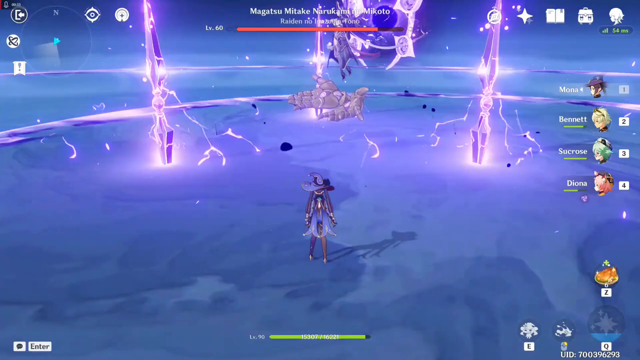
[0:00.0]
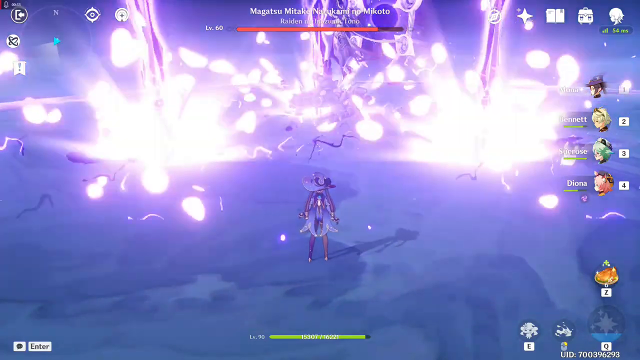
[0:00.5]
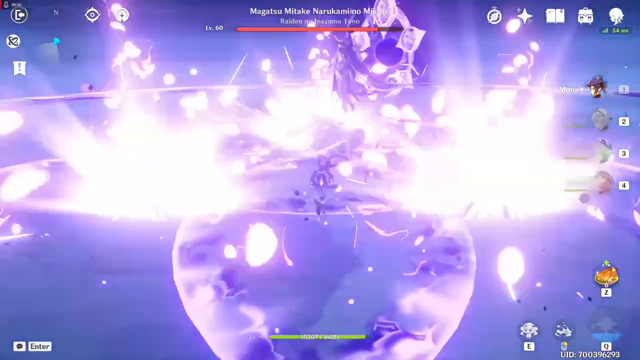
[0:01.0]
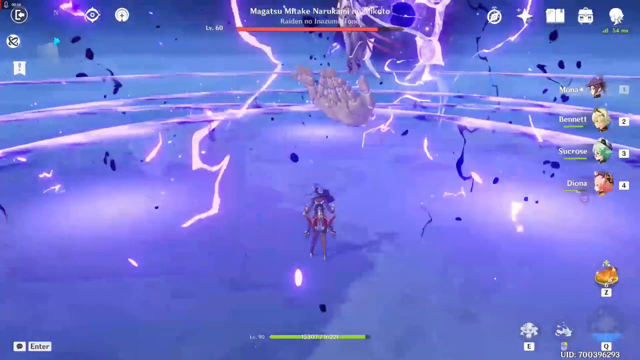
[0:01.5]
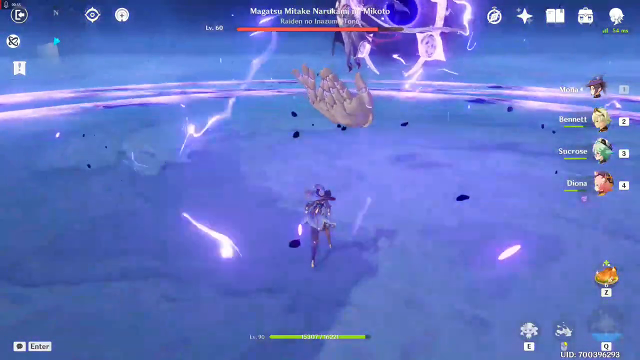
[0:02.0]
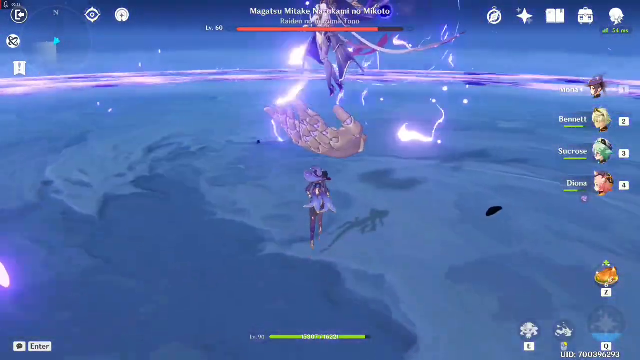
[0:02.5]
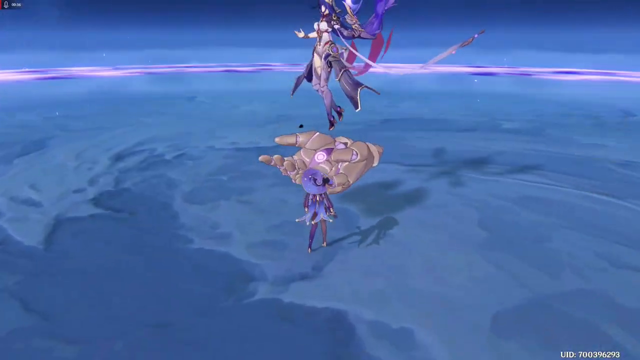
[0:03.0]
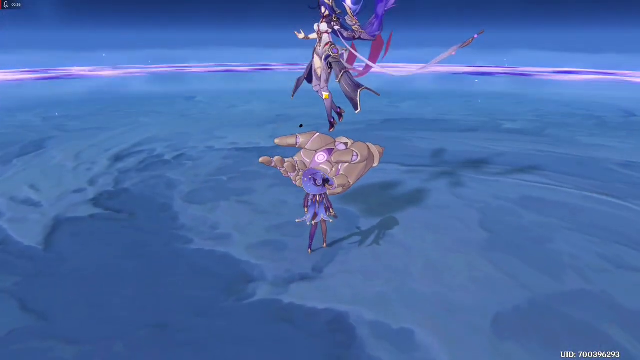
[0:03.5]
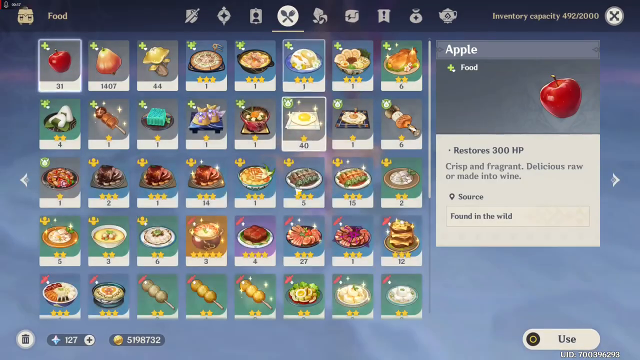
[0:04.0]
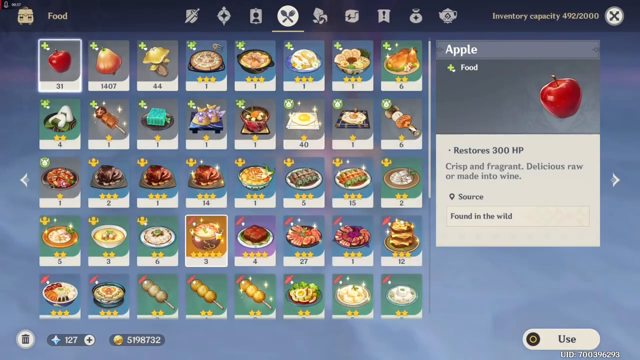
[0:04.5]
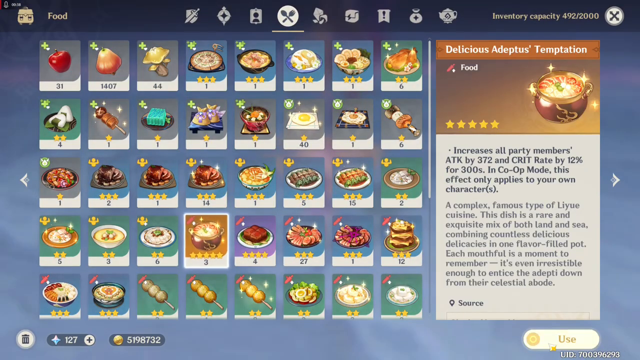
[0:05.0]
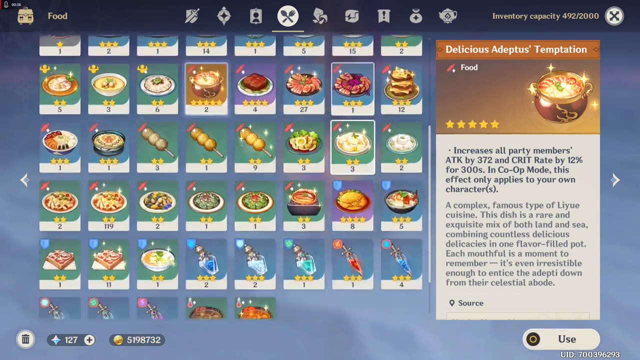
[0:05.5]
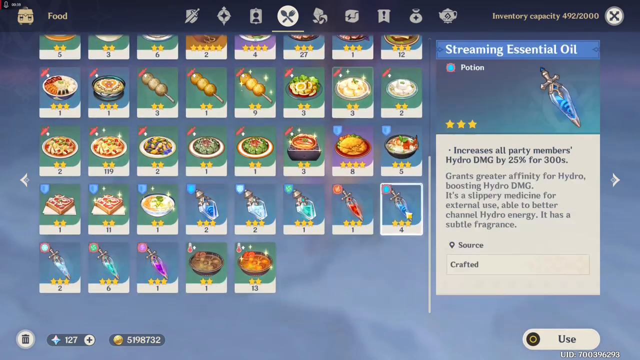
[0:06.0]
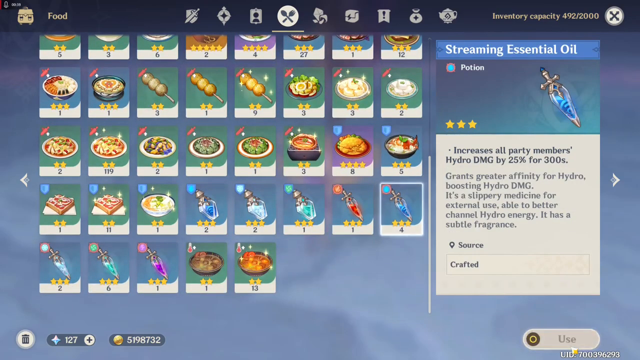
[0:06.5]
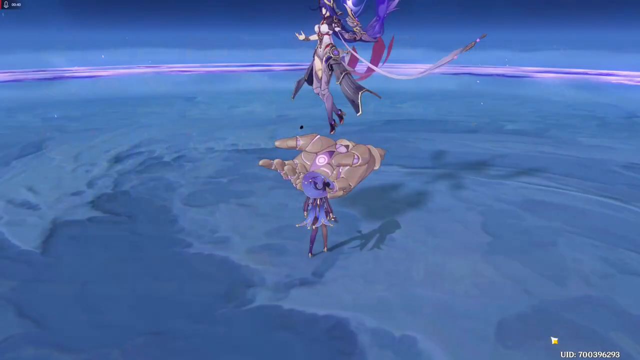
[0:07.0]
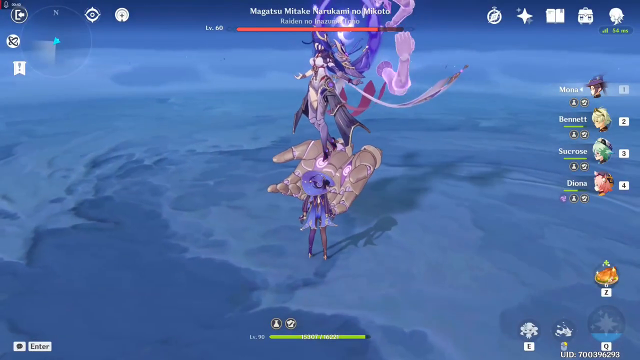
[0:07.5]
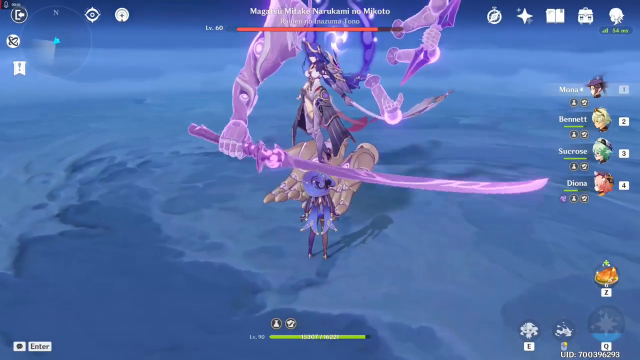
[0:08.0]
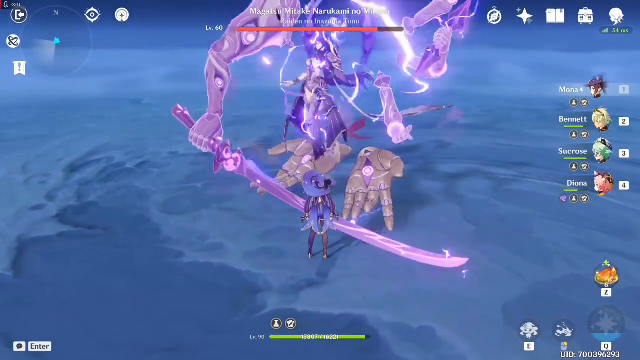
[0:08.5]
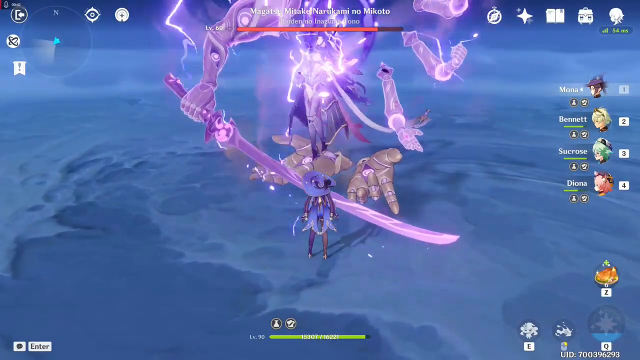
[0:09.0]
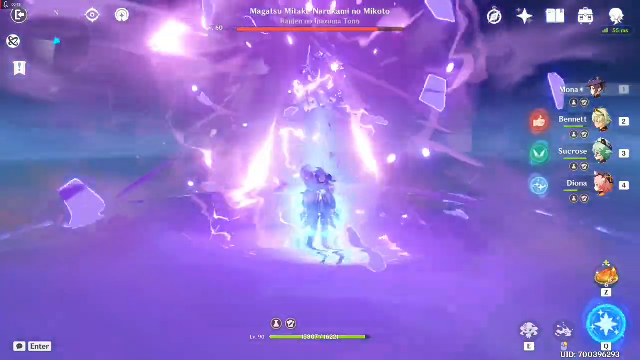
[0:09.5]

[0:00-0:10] This is a video game playthrough. At first, a character is in battle in a large arena. Then the person playing the game apparently brings up the menu screen to select an object for the game character being played in the center of the screen. They select a sword, which is given to the character, and the character appears to turn around to continue playing and engage in the battle. In the top center of the screen are some game stats, apparently the character's name and their statistics at this point in the game. Other buttons are all around the top part of the screen. On the right side of the screen are more buttons, which look like they are different gameplay characters.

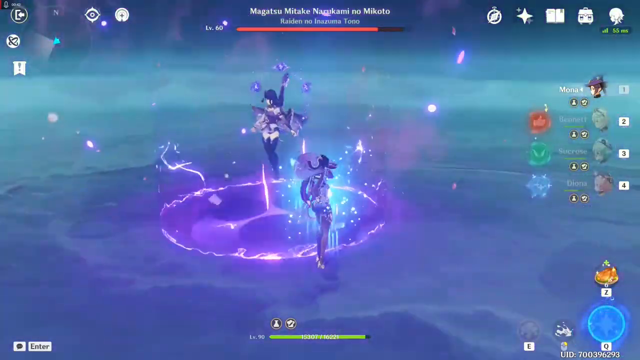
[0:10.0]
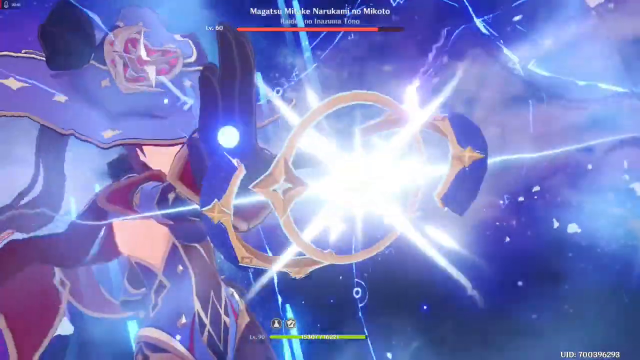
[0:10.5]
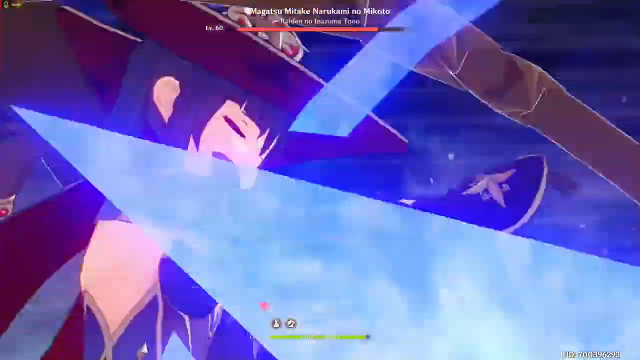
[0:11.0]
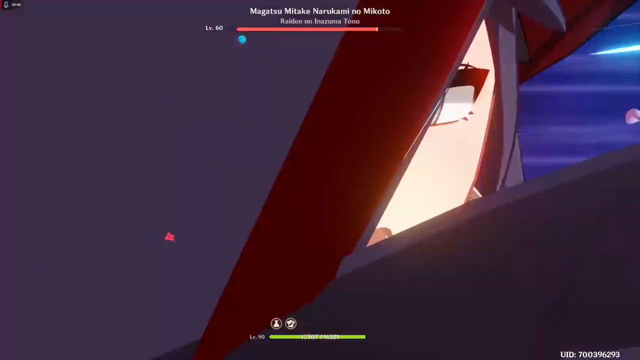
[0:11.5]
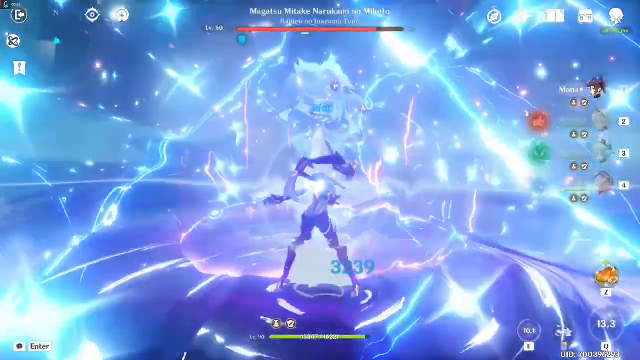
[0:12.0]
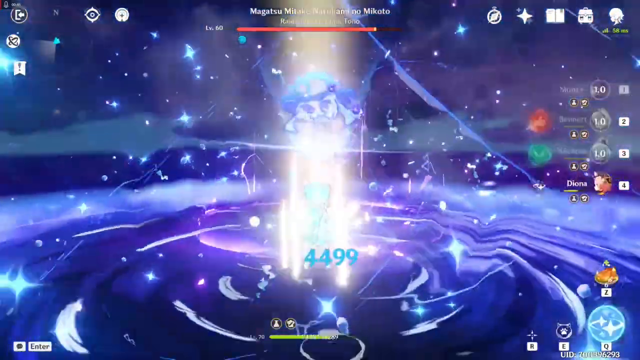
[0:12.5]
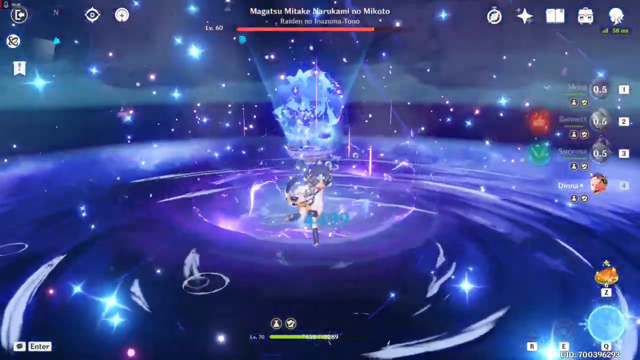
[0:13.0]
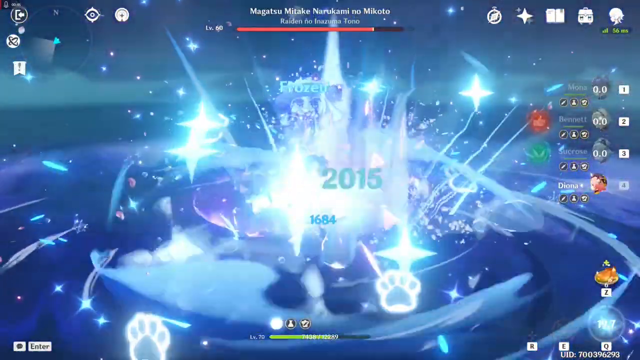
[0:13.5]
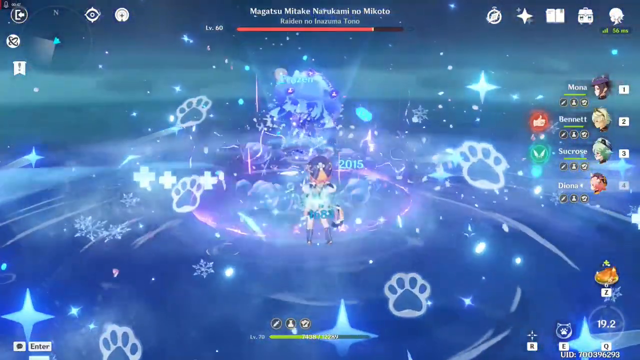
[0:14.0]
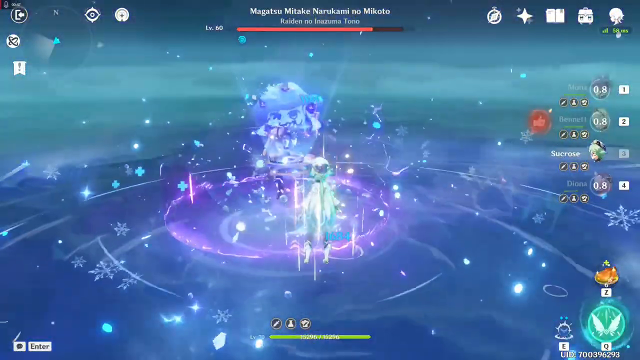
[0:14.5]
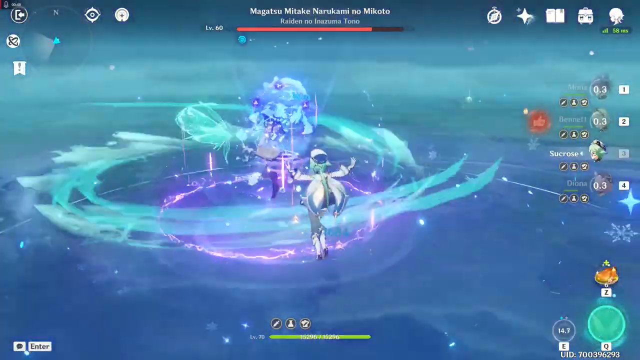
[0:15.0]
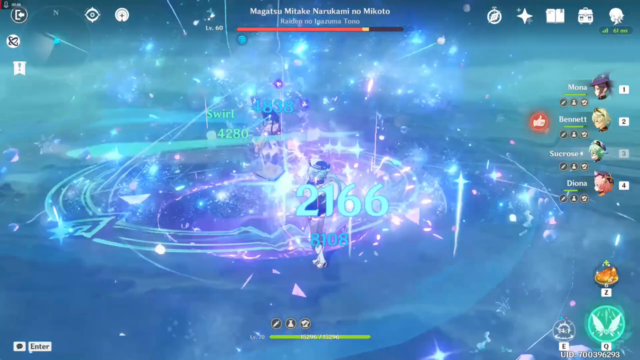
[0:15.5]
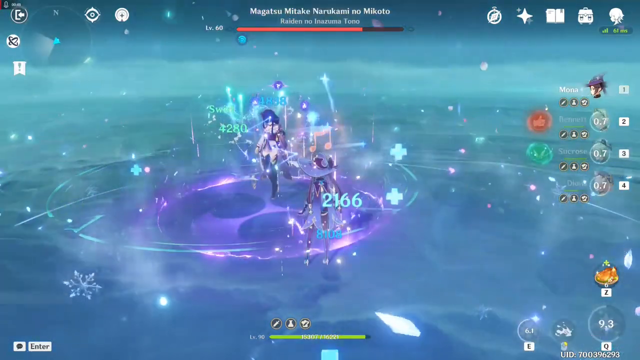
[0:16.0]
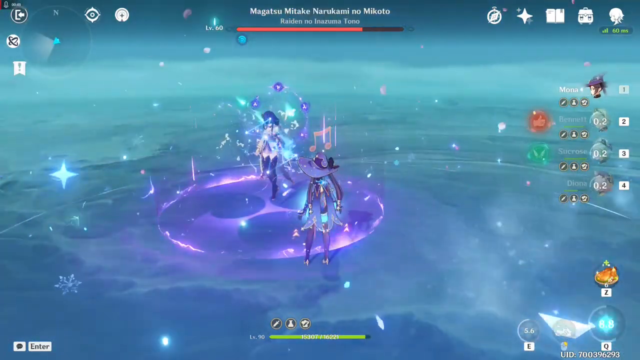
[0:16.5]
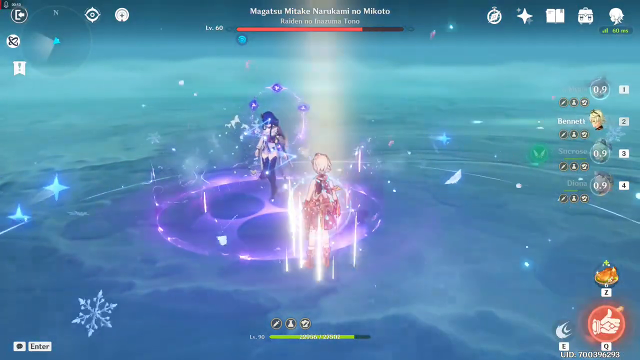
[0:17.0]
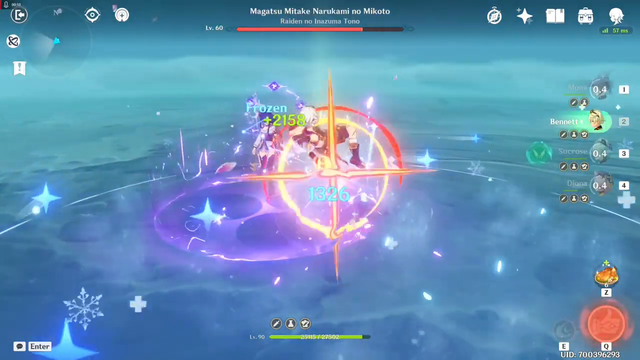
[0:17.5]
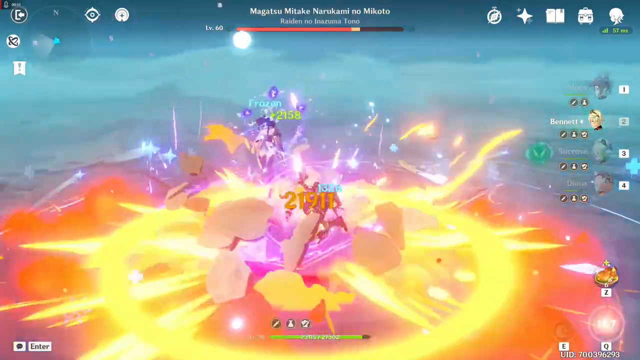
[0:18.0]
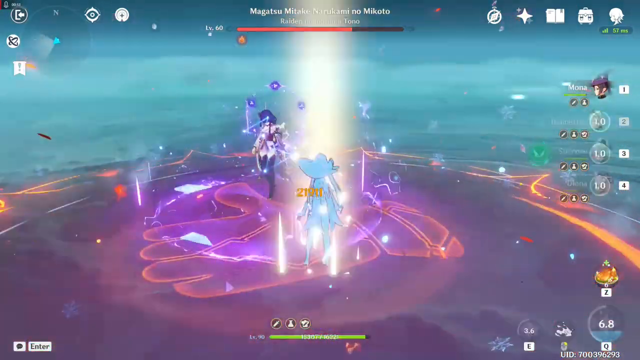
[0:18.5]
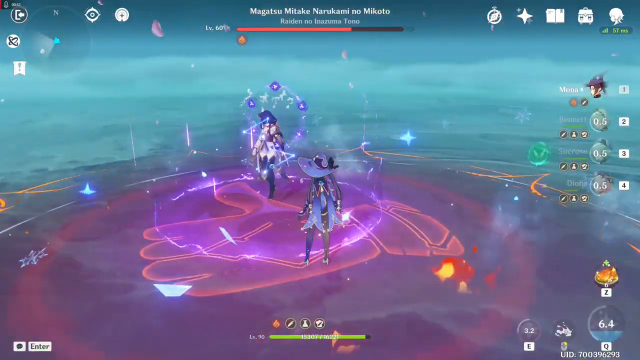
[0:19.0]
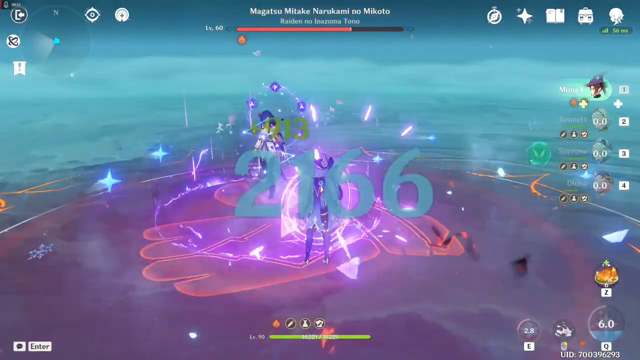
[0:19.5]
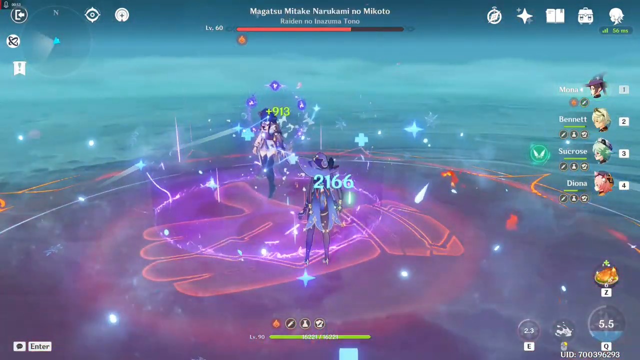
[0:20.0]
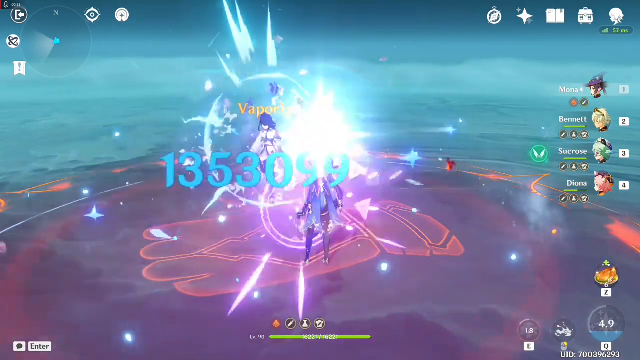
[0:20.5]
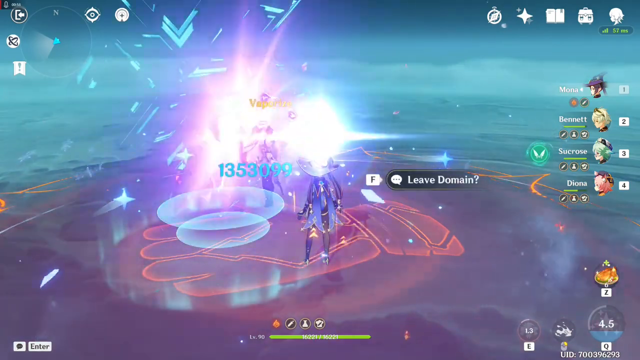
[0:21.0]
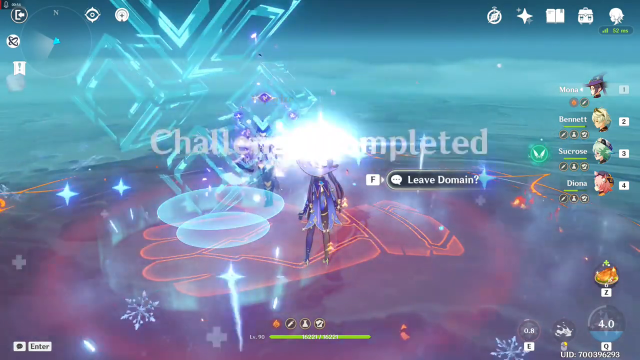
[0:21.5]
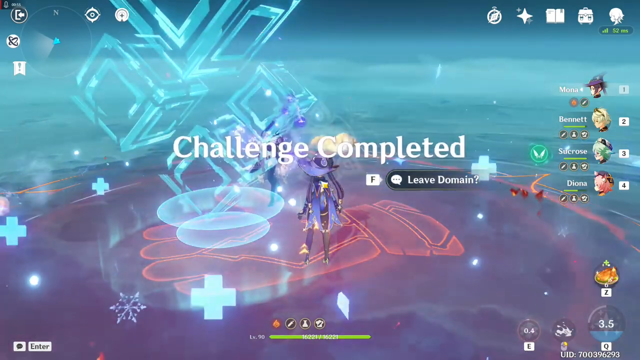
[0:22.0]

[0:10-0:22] In this video game playthrough, the character on the screen is a woman who looks like a wizard. She is doing battle in the middle of a large arena and appears to be using her weapons and scoring points against the other player. She eventually wins the battle, as text comes up on the screen that says "Challenge completed". In the upper middle part of the screen are some game stats, apparently the player's name and possibly their description, with a progress bar underneath that is filled with red and almost all the way full. There are other buttons at the top of the screen to the right and left, and on the right side of the screen more players appear to be represented.